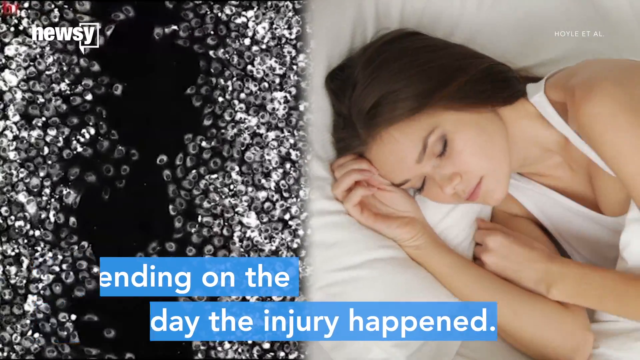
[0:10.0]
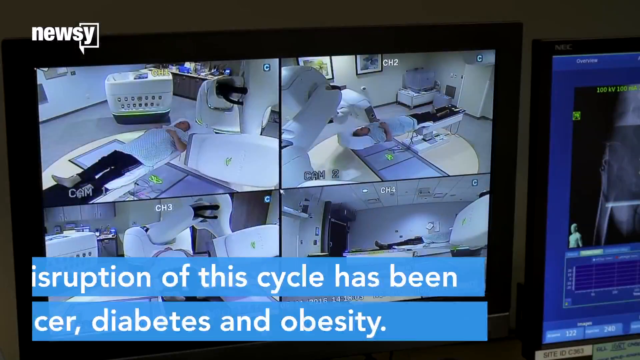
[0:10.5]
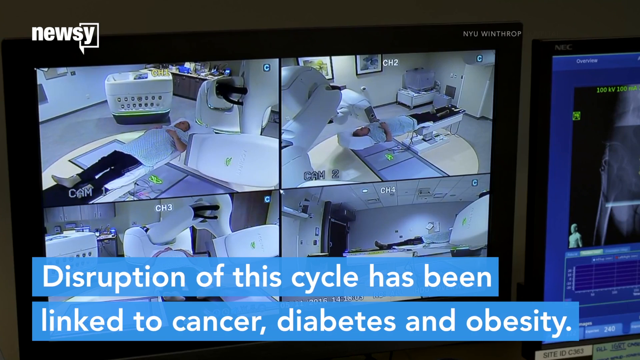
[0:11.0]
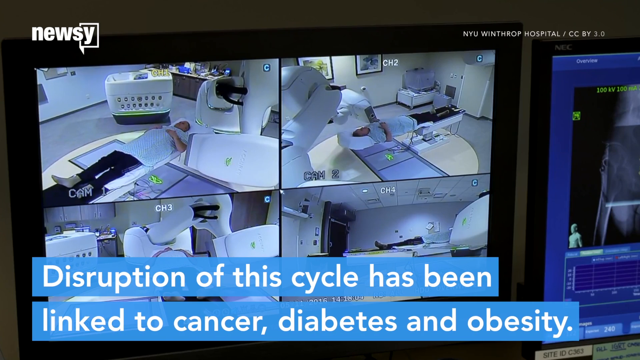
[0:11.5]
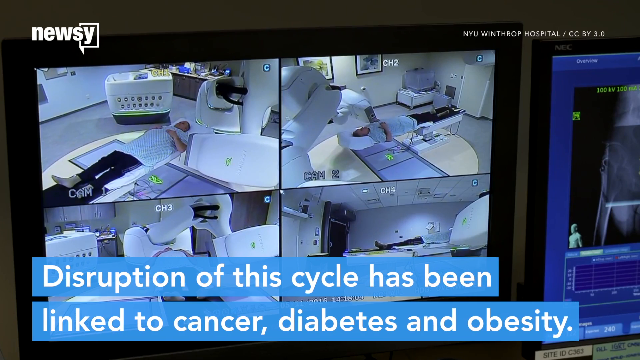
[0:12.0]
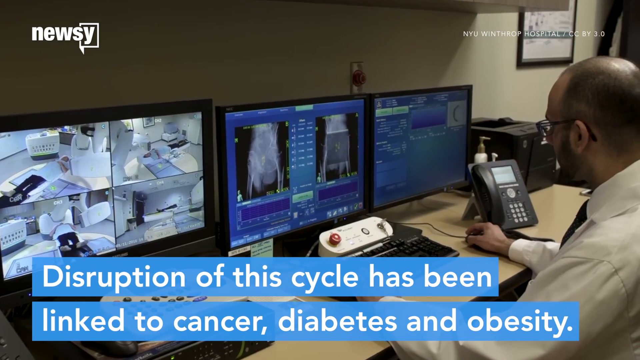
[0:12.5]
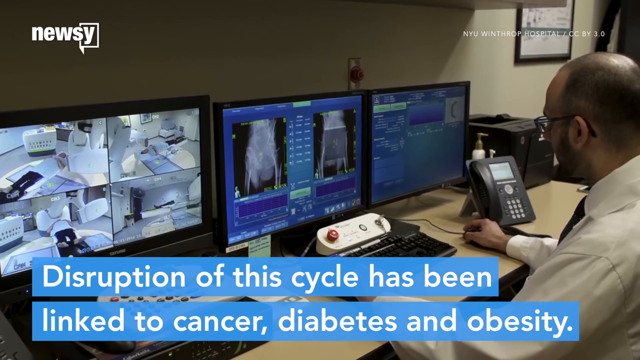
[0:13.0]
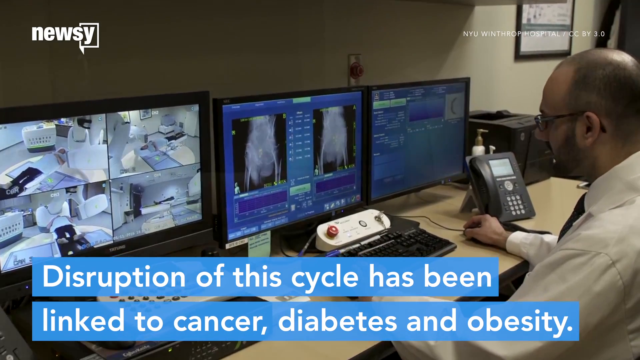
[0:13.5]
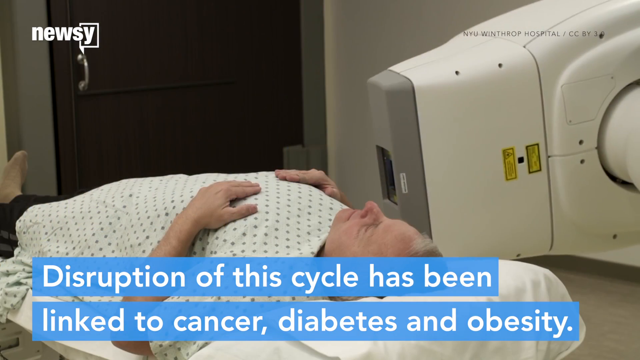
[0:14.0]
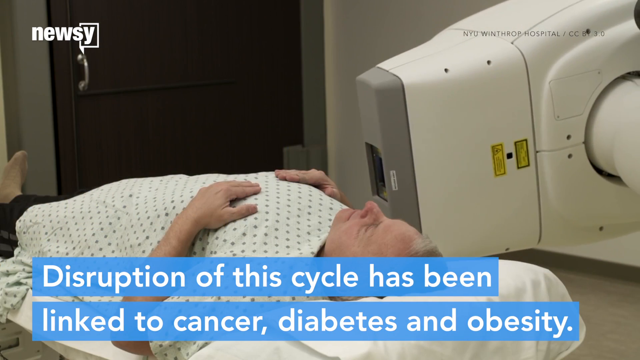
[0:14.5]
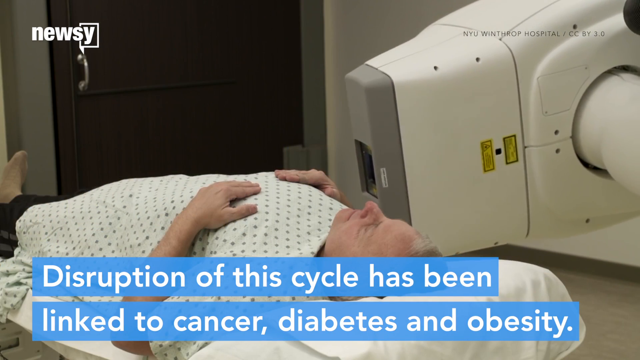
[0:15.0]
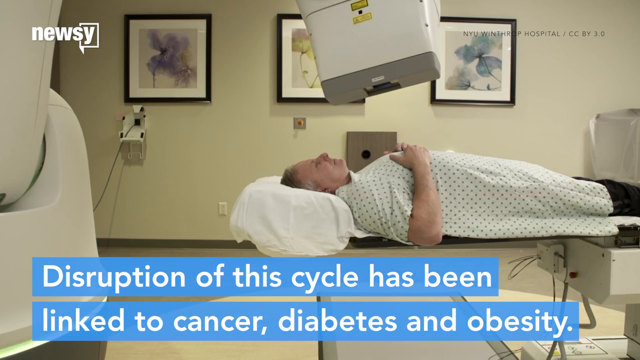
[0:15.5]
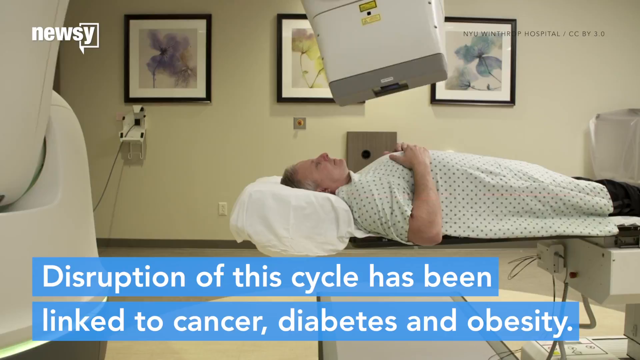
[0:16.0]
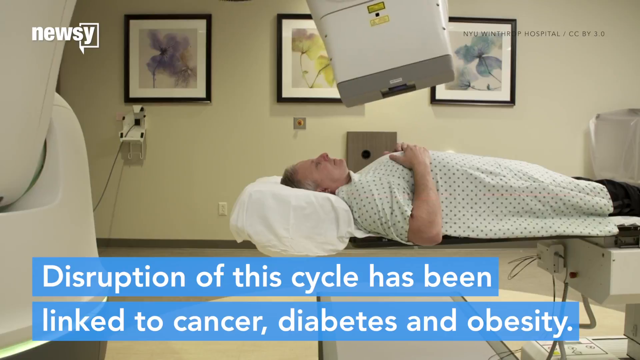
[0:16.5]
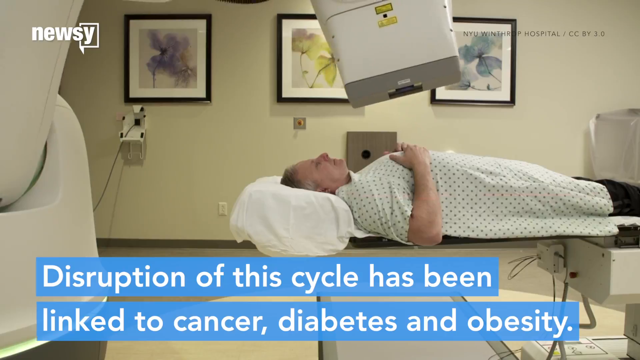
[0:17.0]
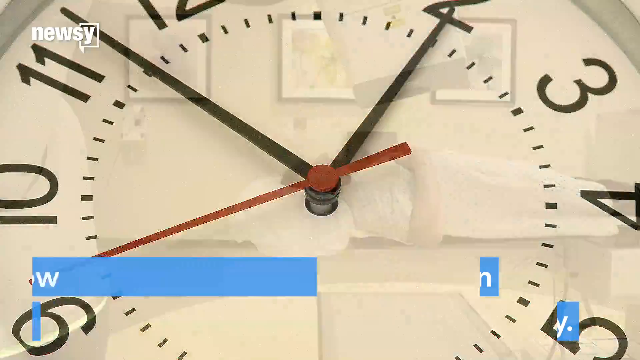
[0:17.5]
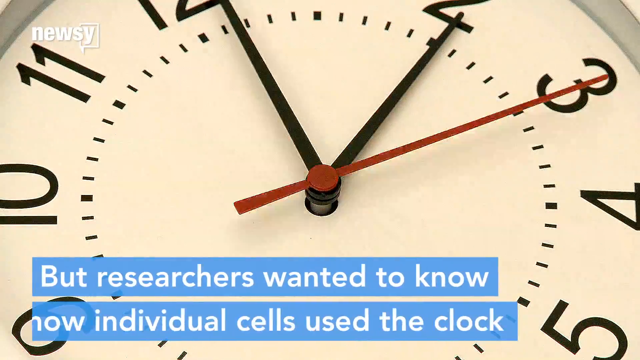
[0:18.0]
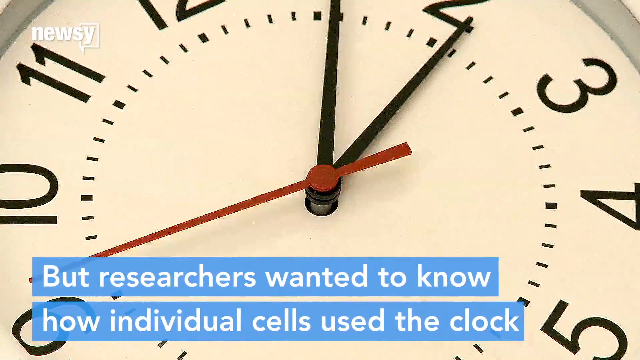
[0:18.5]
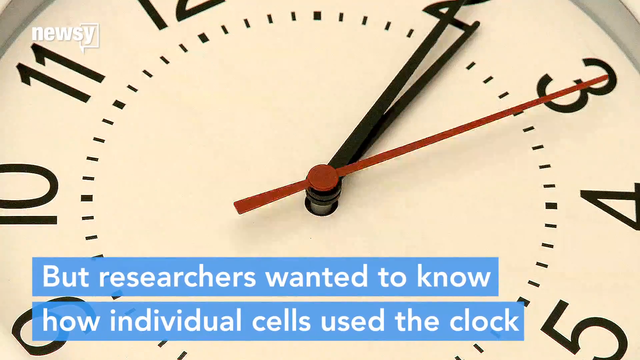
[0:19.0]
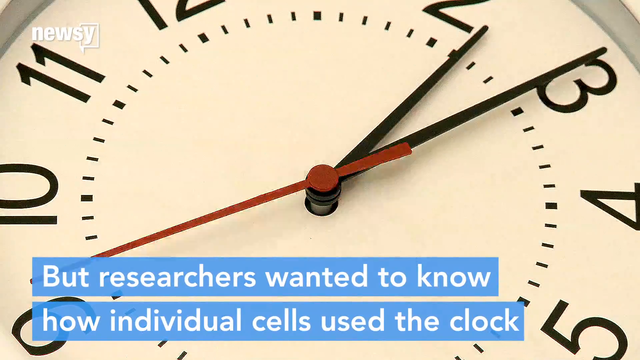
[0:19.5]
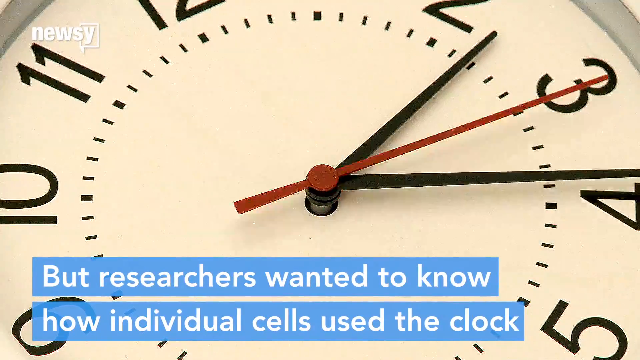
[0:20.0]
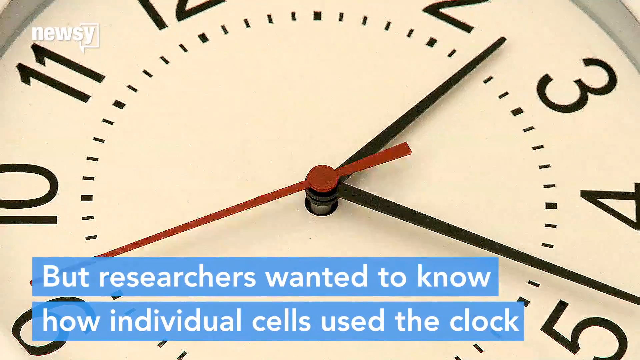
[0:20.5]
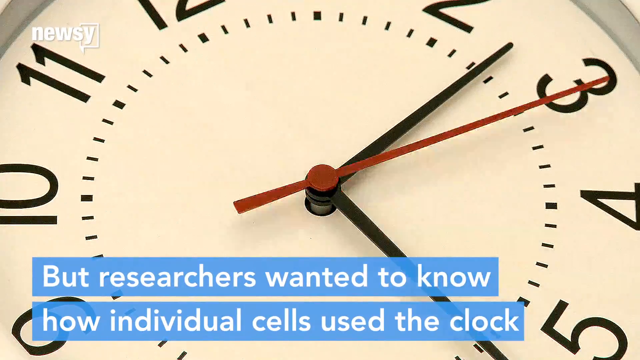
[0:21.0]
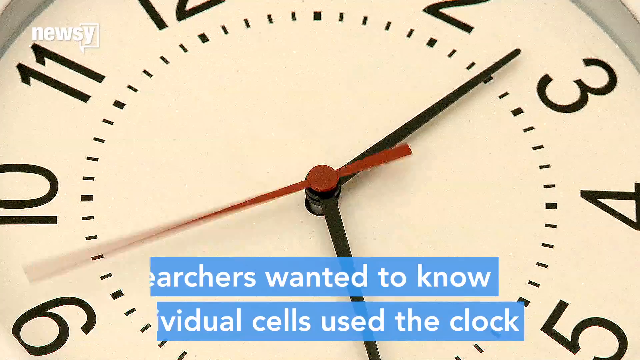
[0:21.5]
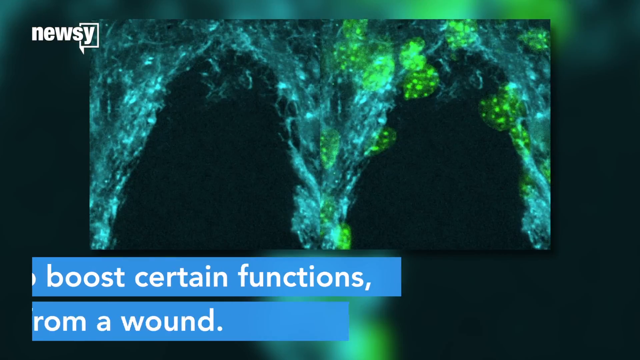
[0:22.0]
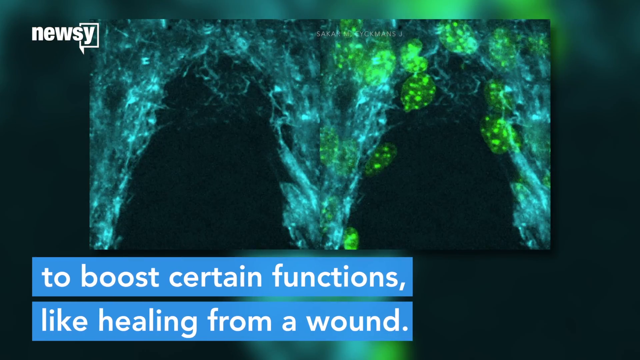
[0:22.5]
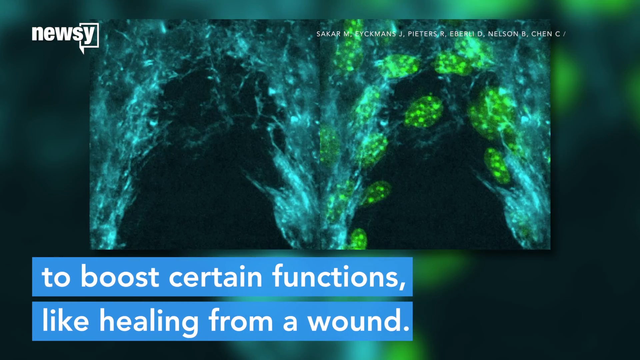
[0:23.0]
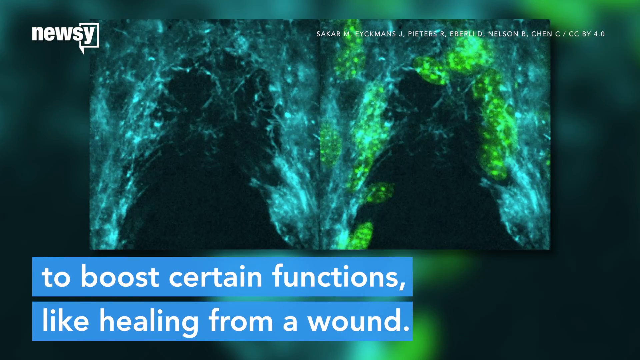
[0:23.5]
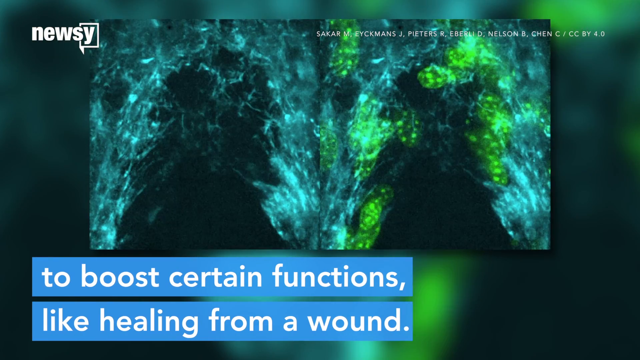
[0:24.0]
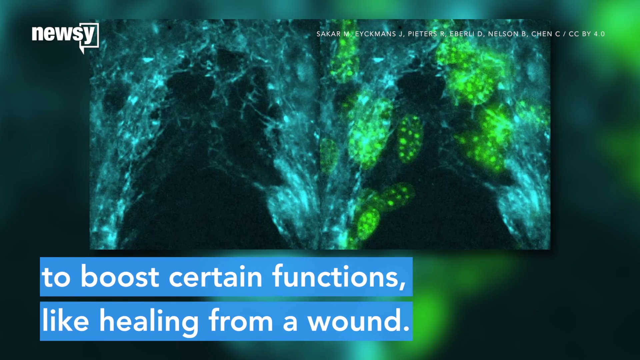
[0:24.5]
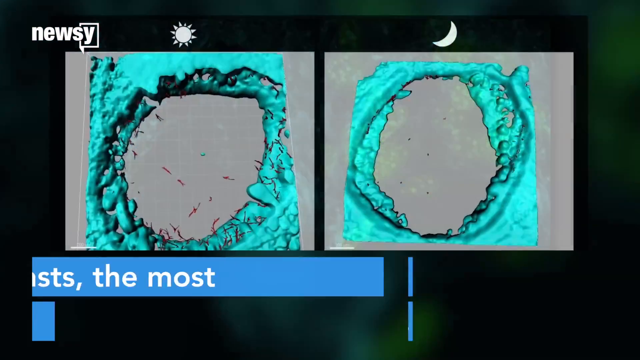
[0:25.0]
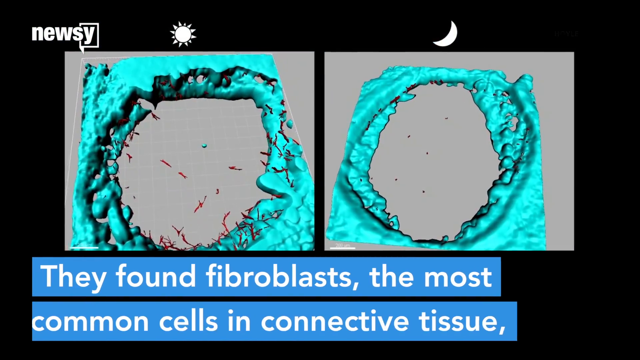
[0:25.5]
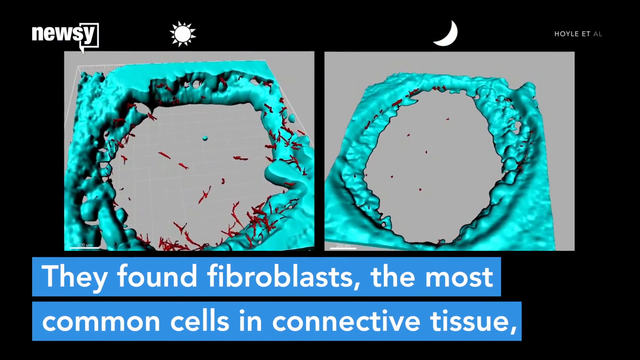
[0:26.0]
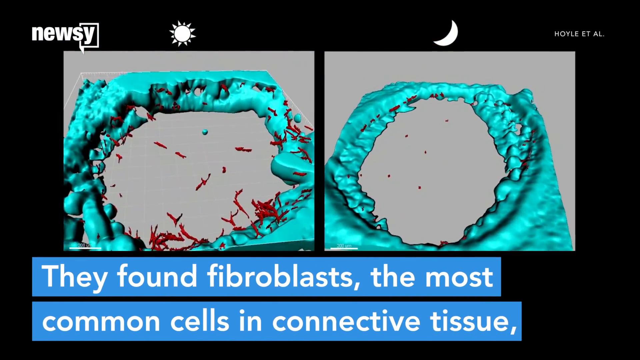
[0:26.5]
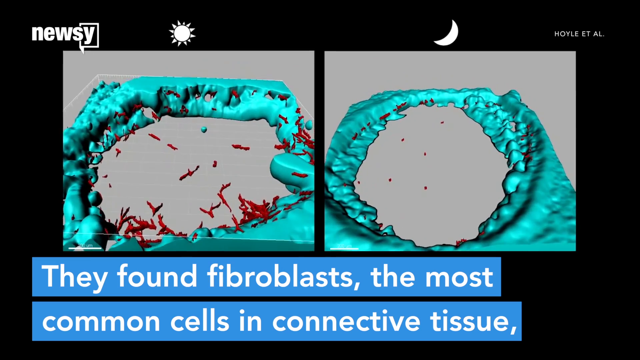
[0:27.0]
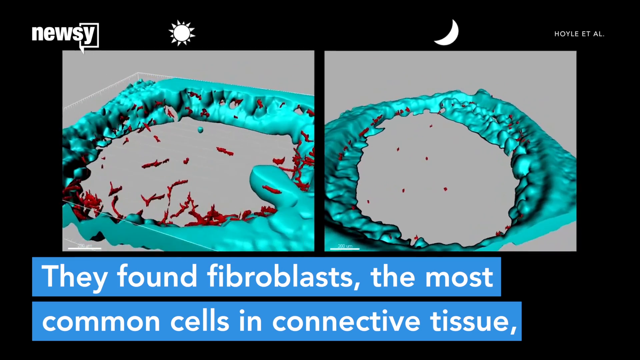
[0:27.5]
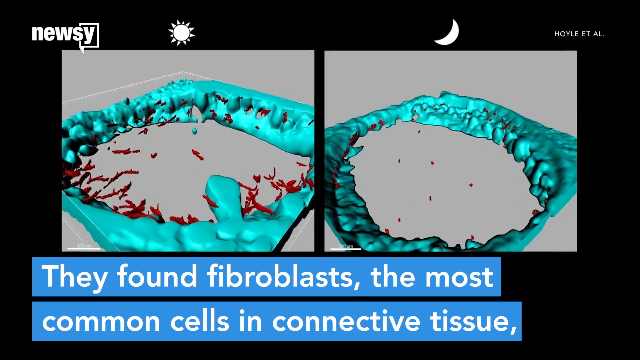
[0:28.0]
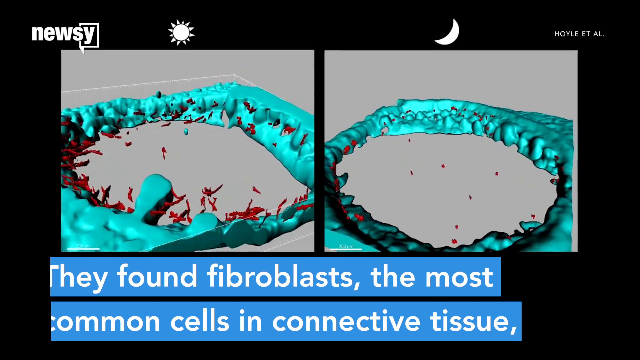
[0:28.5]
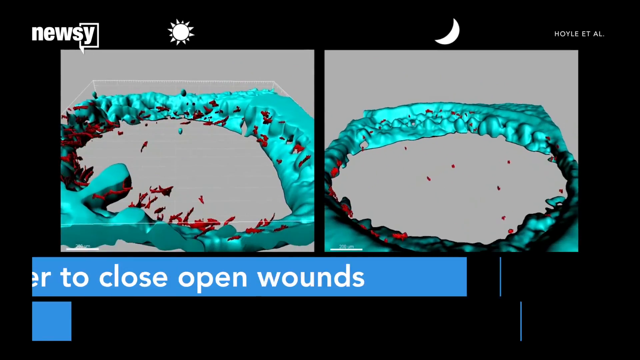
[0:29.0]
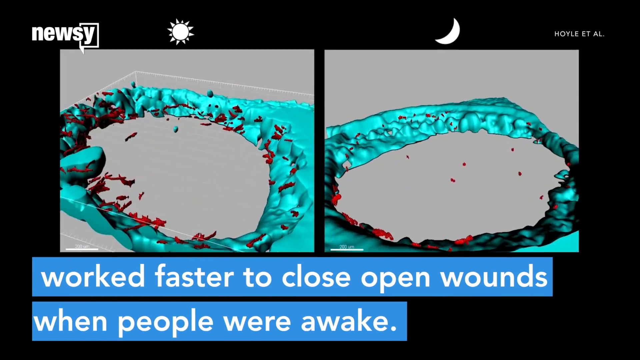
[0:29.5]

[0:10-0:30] The video cuts to a surveillance monitor with four video channels showing some kind of clinic. The text at the bottom reads "disruption of this cycle has been linked to cancer, diabetes, and obesity." The surveillance room of a building, possibly a health care facility, is shown, where security personnel look at three computer monitors. A fax machine telephone and a keyboard are in front of him, and some kind of switch with a red button is above the keyboard. Next, a patient on a table gets a scan from a machine possibly similar to a full-body scanner; it has an arm that moves around, and the scanner is right above the patient. The video cuts to a very close-up shot of a wall clock with its hands moving, and the text reads "but researchers wanted to know more, wanted to know how individual cells used the clock." It then cuts to a side-by-side microscopic photograph with blue and green highlights, with the text "to boost certain functions like healing from a wound." Next comes a 3D animation of wound healing with red vine-like things sticking out of a blue blob with a hollowed circle center, and the text reads "they found fibroblasts, the most common cells in connective tissue. Worked faster."